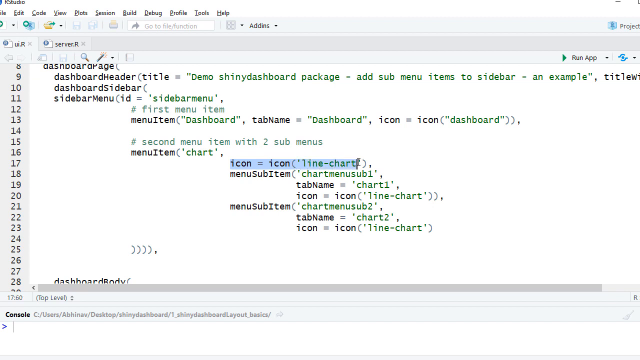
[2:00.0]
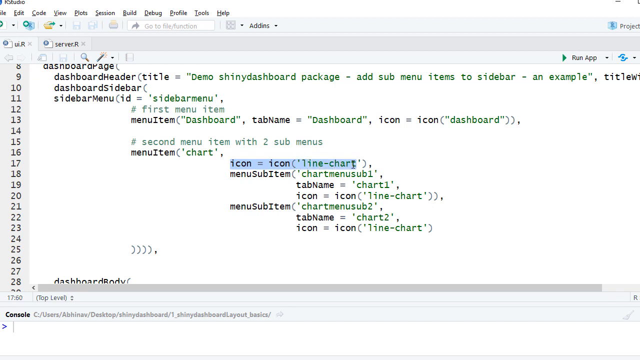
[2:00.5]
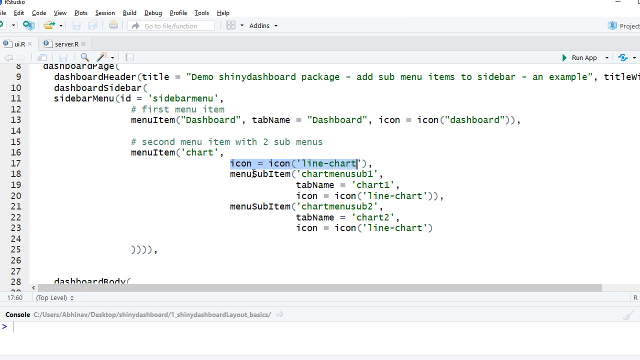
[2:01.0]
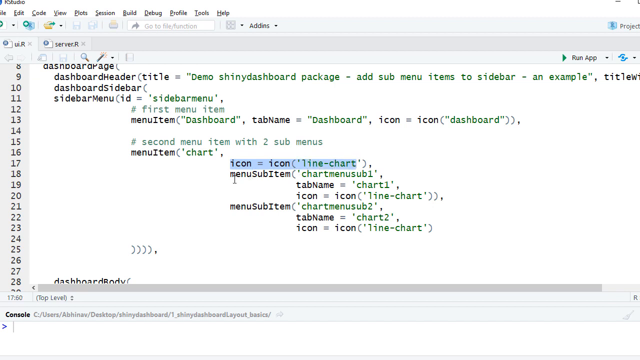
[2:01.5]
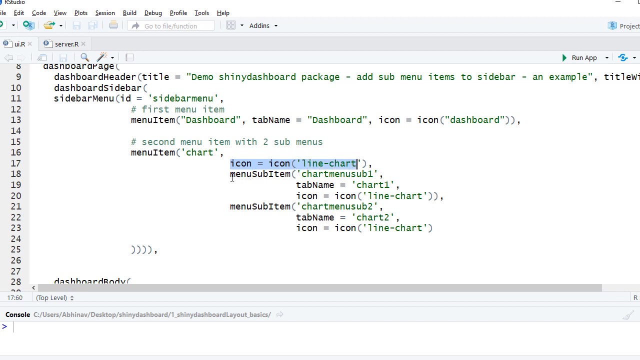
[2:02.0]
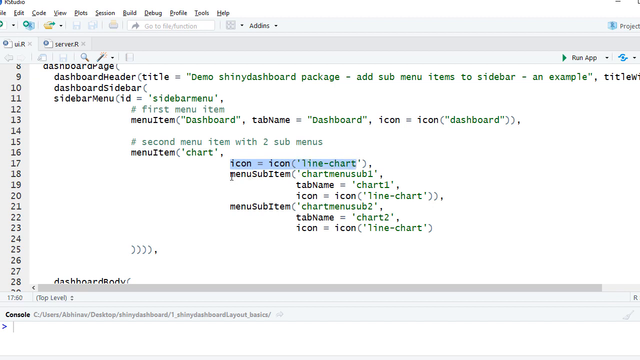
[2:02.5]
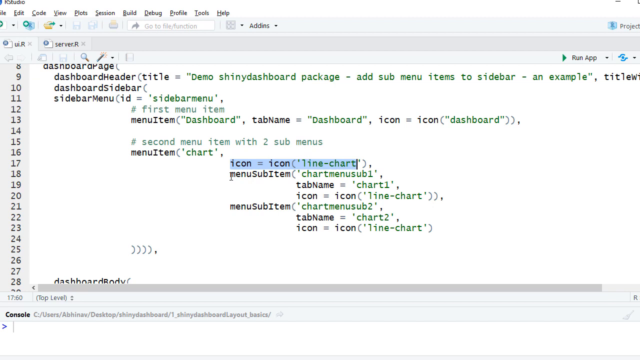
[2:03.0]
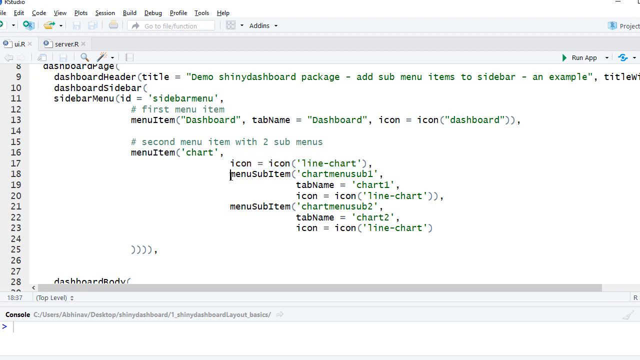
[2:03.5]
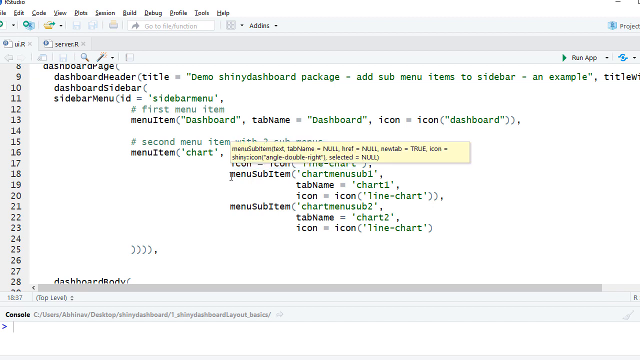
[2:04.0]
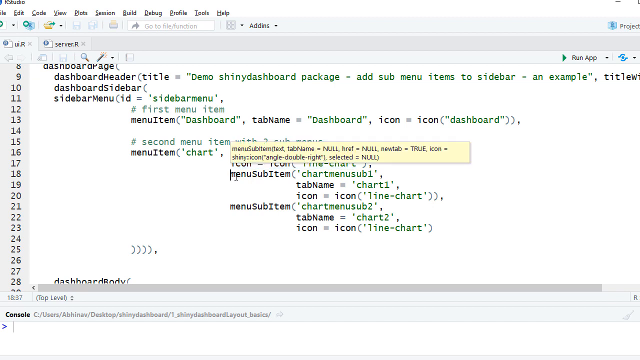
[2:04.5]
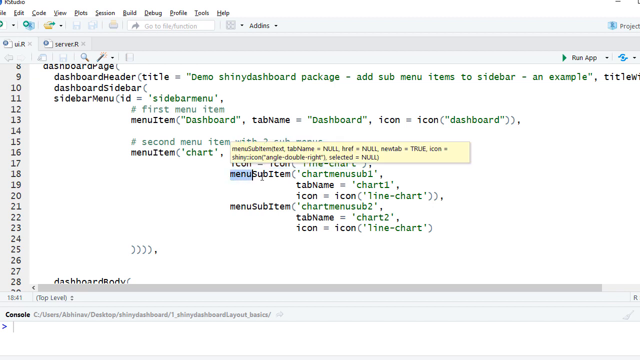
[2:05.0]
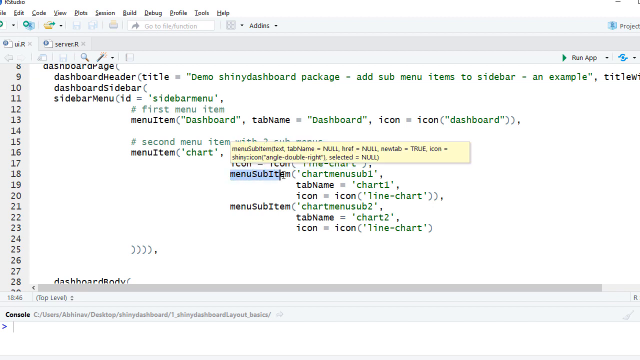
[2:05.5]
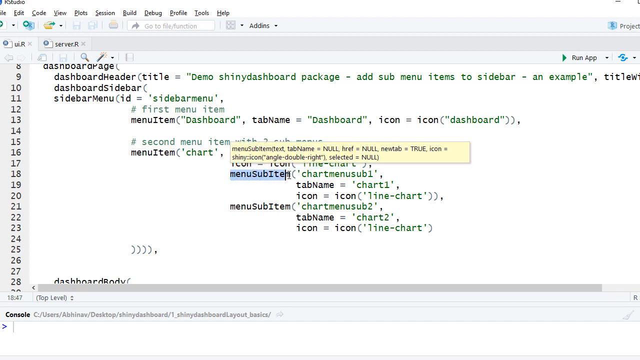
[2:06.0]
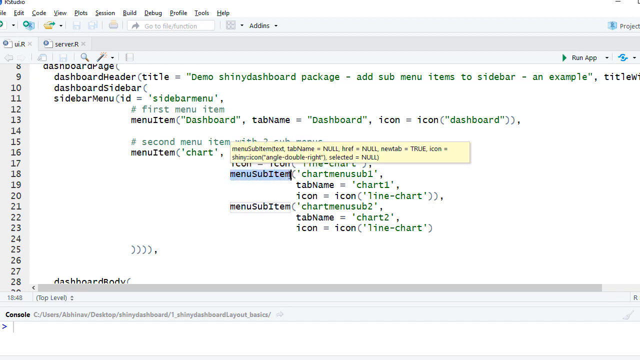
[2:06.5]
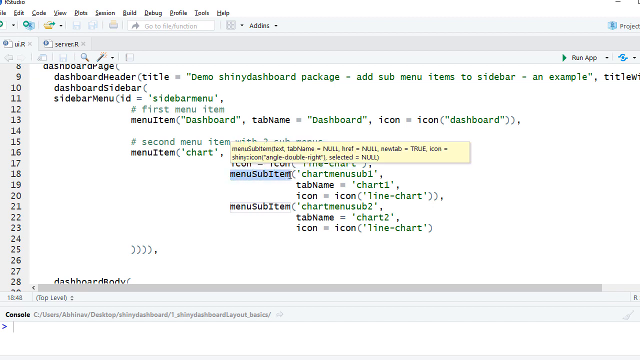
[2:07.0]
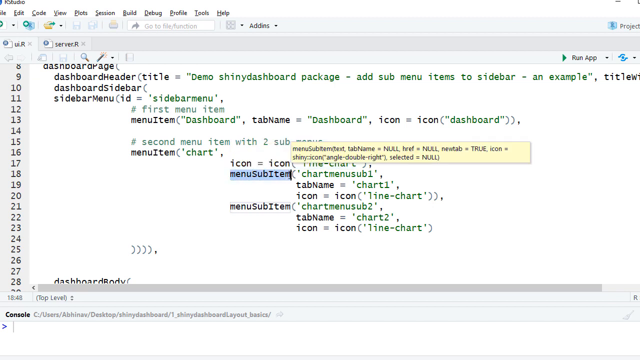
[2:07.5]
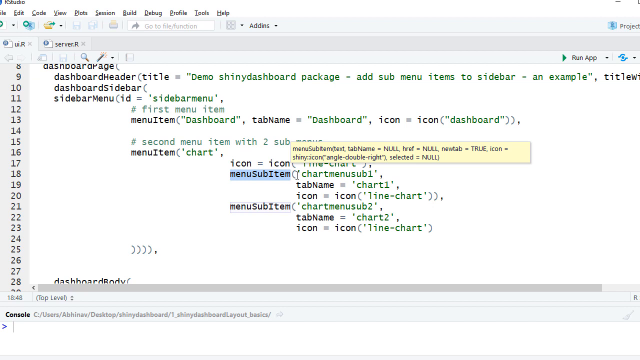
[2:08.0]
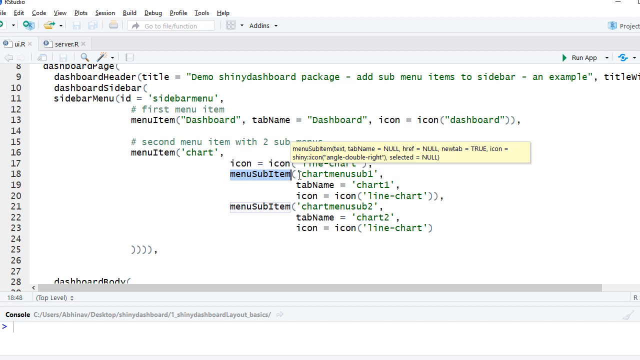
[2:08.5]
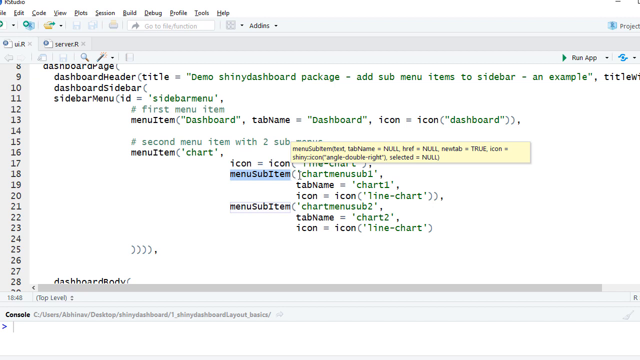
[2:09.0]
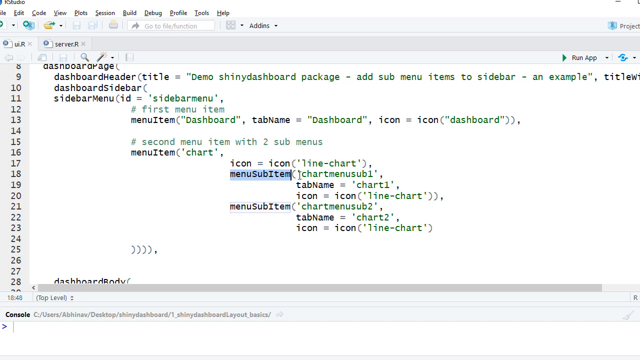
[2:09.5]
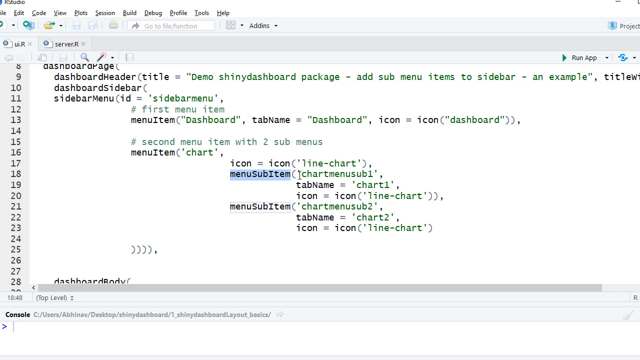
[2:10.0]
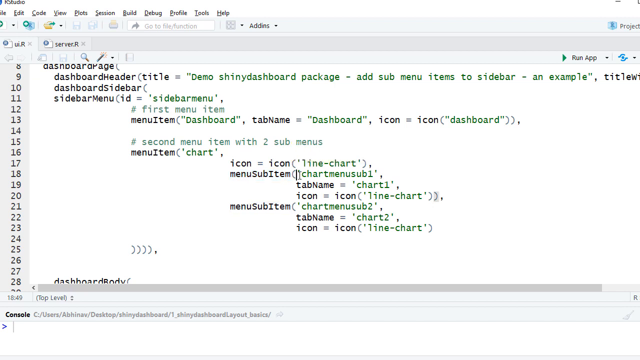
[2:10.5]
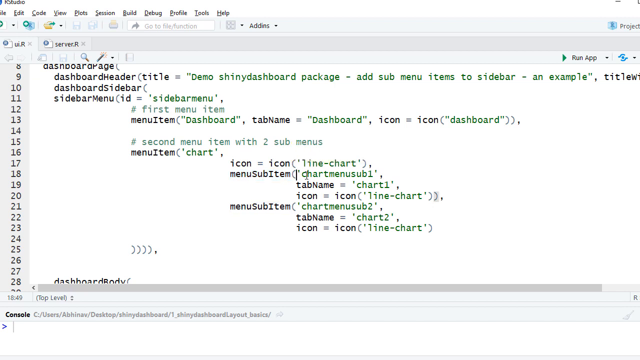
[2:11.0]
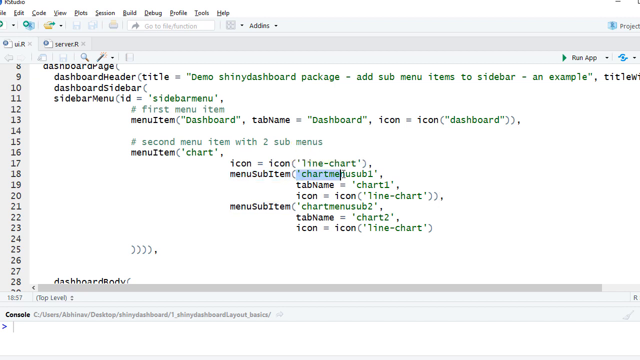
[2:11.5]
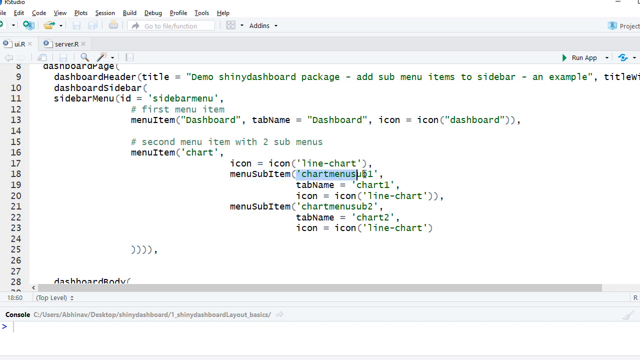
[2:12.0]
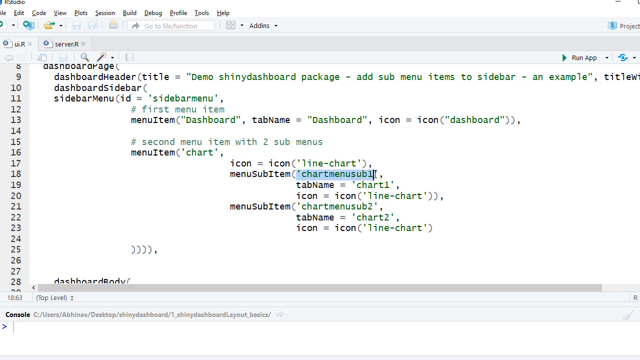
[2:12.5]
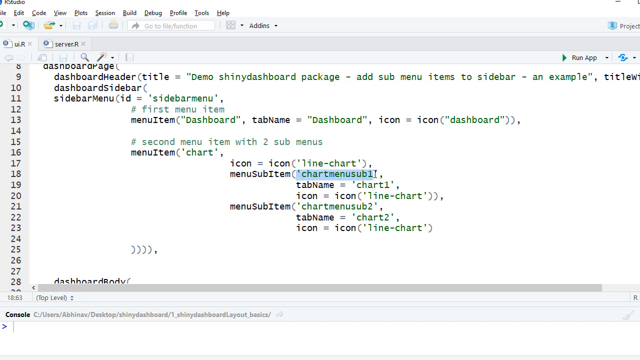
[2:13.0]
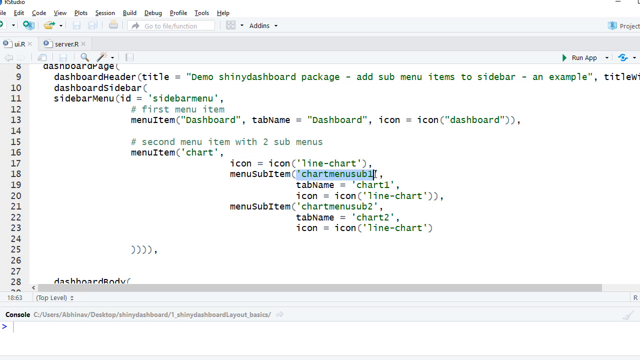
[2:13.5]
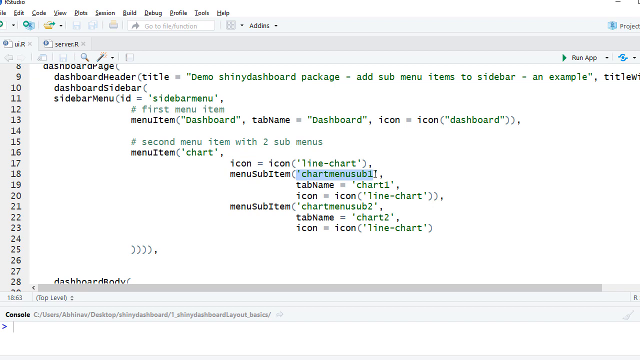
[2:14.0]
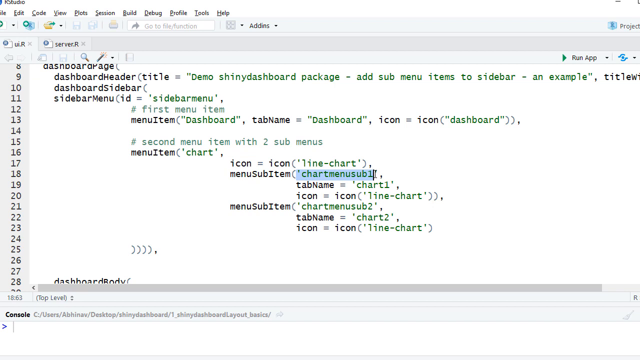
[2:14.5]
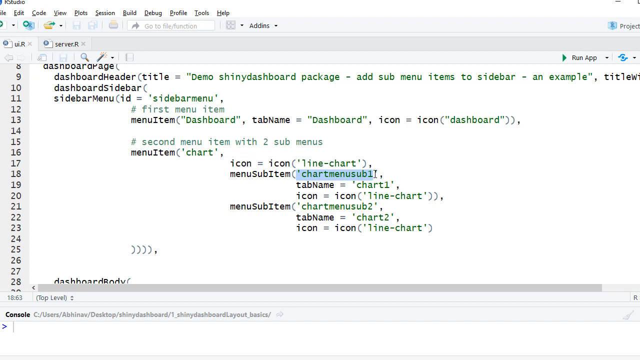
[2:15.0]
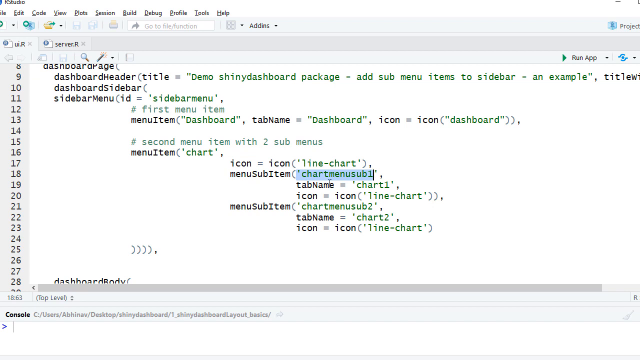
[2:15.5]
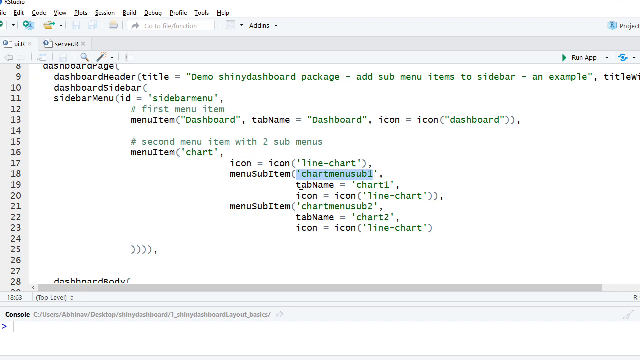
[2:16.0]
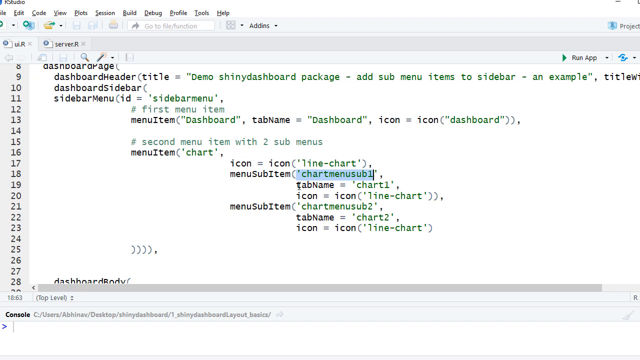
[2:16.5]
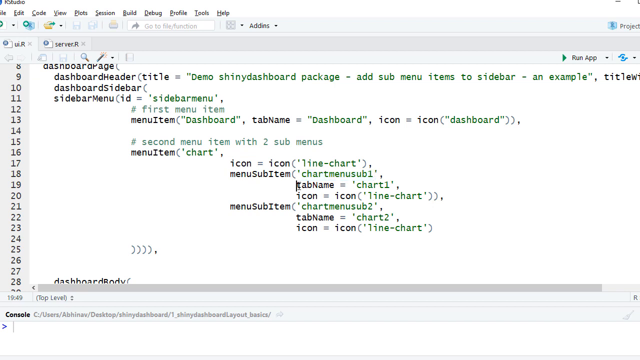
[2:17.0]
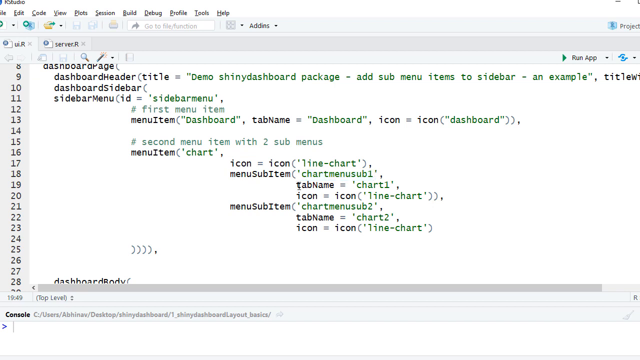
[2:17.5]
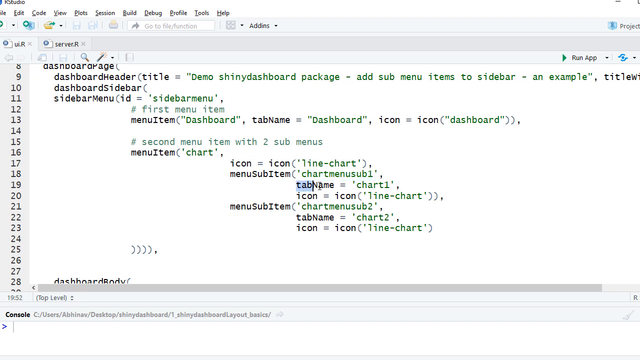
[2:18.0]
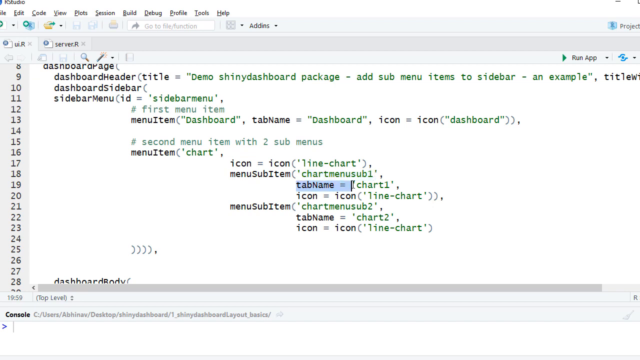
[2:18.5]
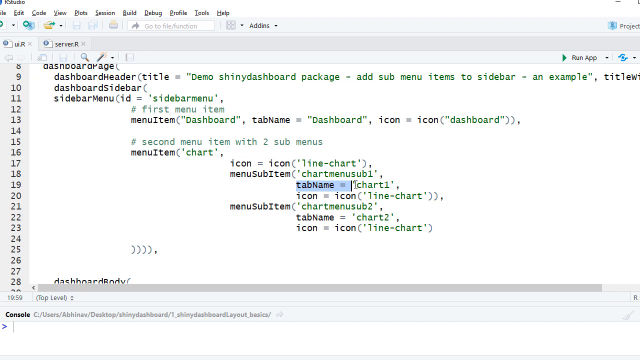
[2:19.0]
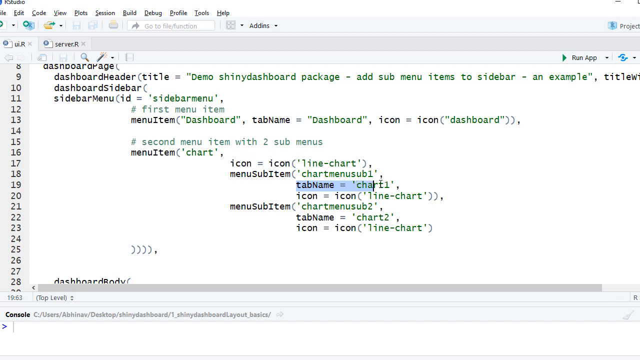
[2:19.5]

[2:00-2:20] The backdrop is all white, with lines 8 to 28 shown and the computer menu with file, edit and so on in a small portion at the top. All the lettering on the left is black and all the lettering on the right is green. Recognizable words include dashboard, menu item, sub-item and icon. The user highlights "menu sub-item," has "menu item" highlighted in blue, removes the highlight, and then highlights "chart," "menu" and "sub" in blue. Next "tab name" is highlighted in blue, but the highlighting does not lead to a different screen.